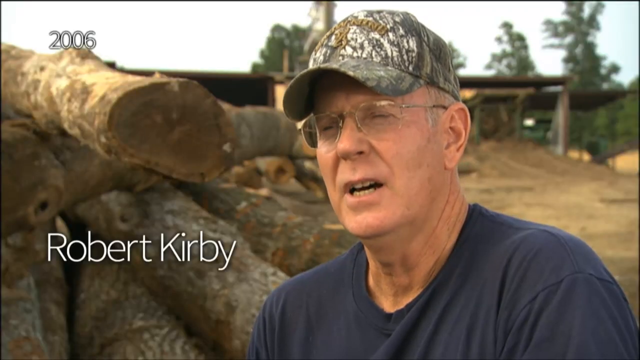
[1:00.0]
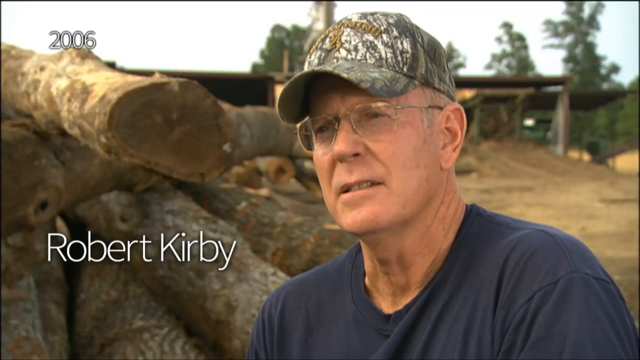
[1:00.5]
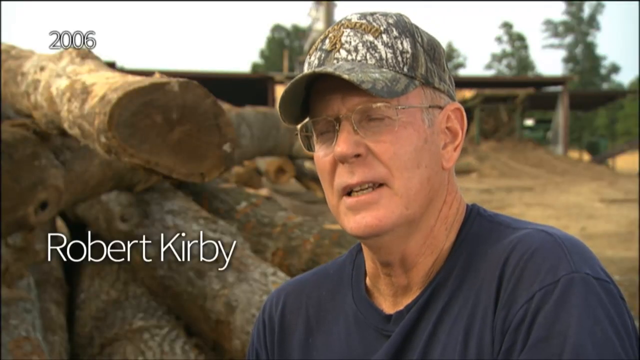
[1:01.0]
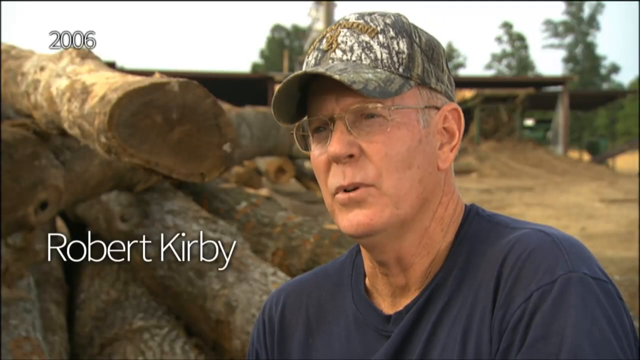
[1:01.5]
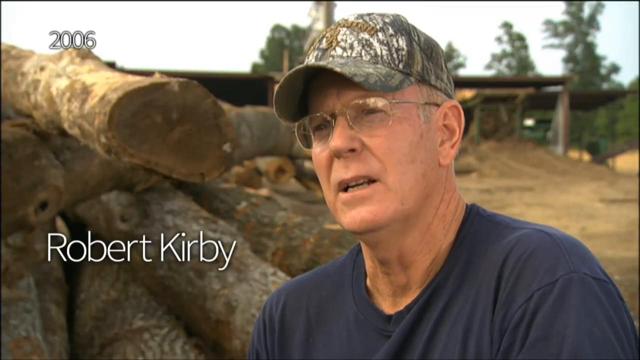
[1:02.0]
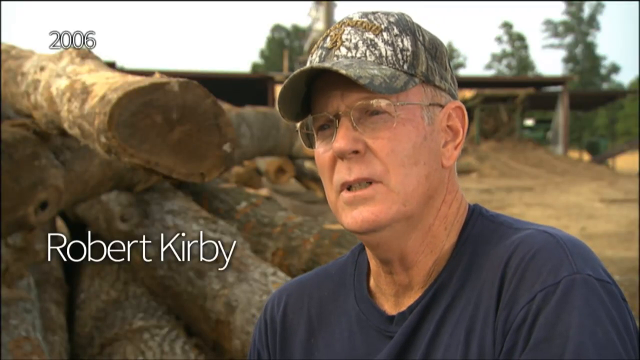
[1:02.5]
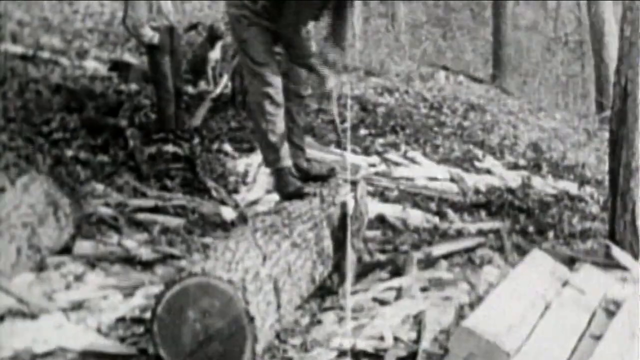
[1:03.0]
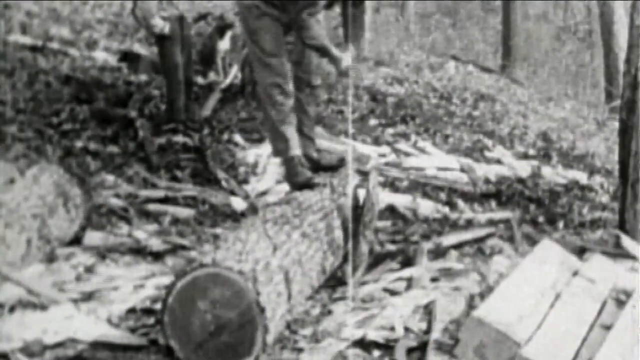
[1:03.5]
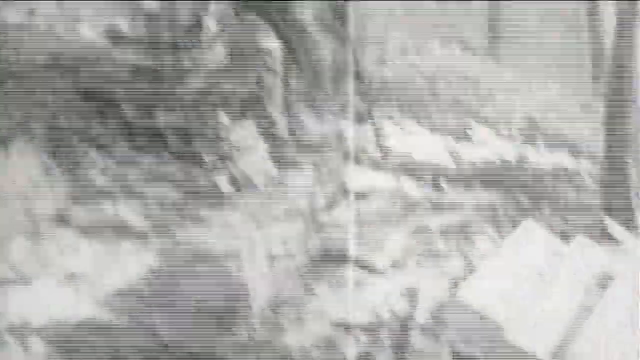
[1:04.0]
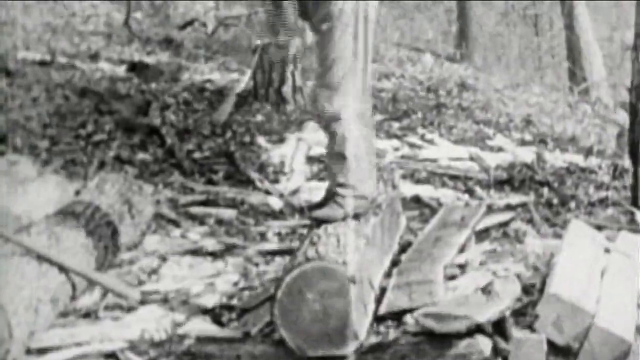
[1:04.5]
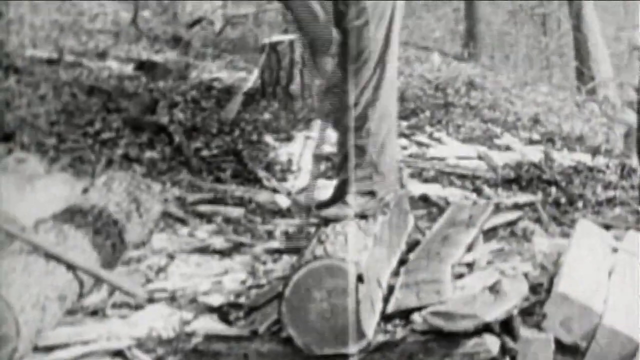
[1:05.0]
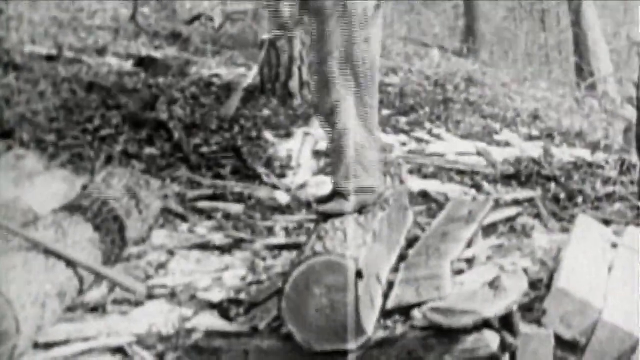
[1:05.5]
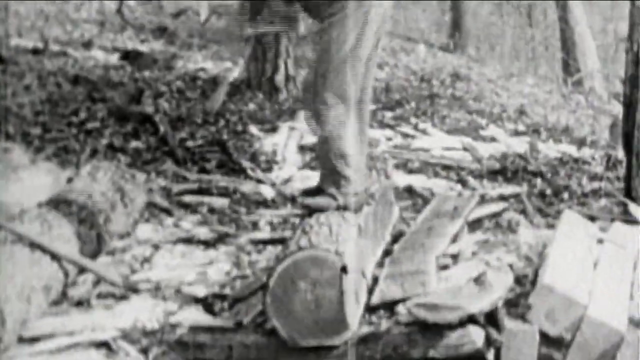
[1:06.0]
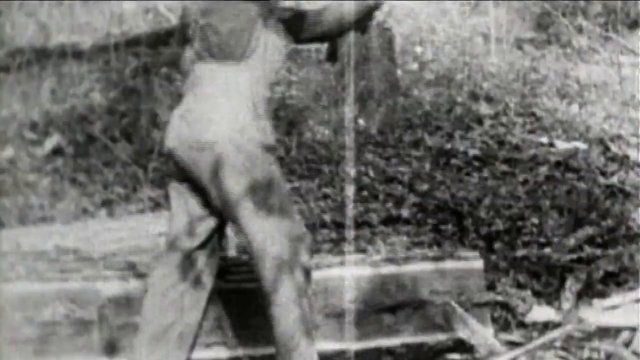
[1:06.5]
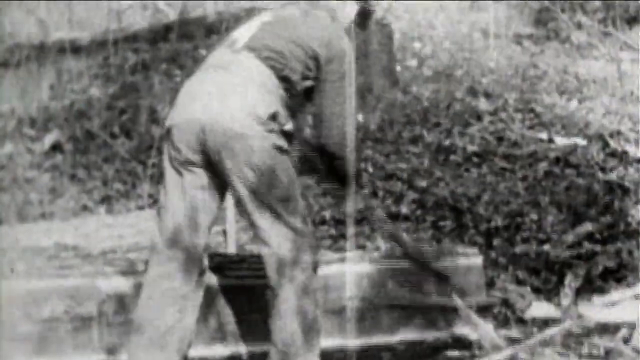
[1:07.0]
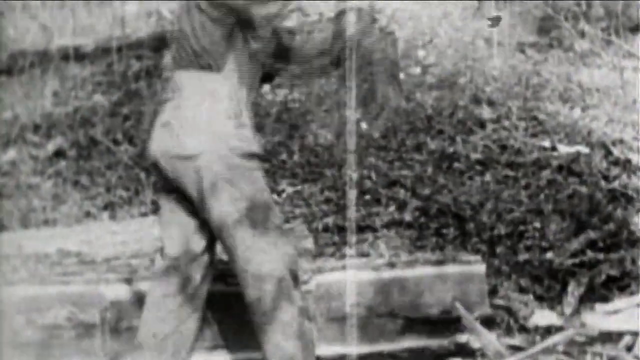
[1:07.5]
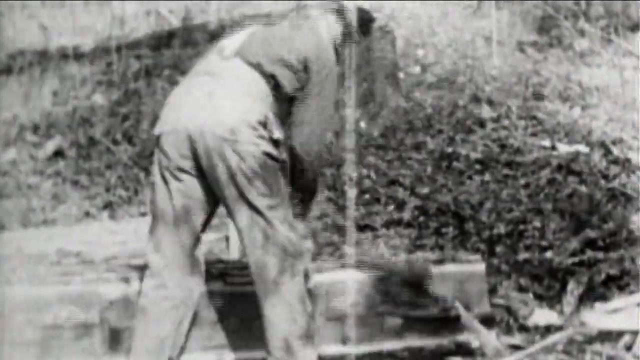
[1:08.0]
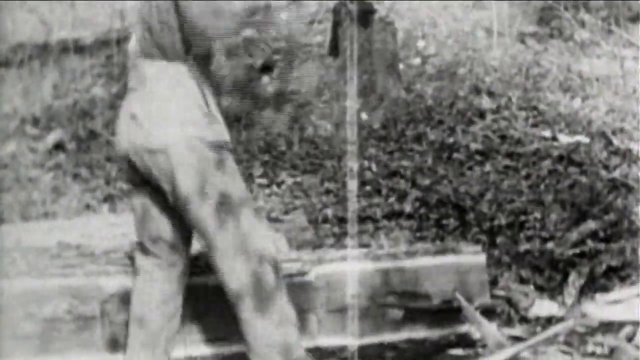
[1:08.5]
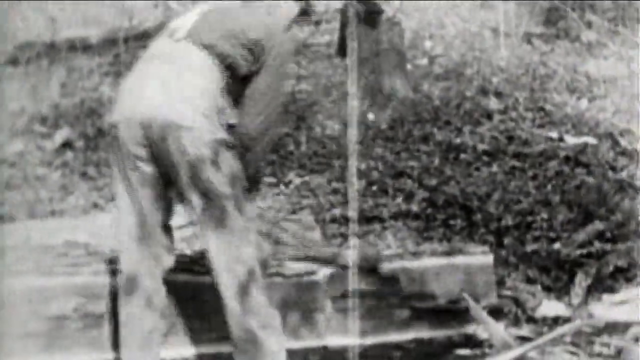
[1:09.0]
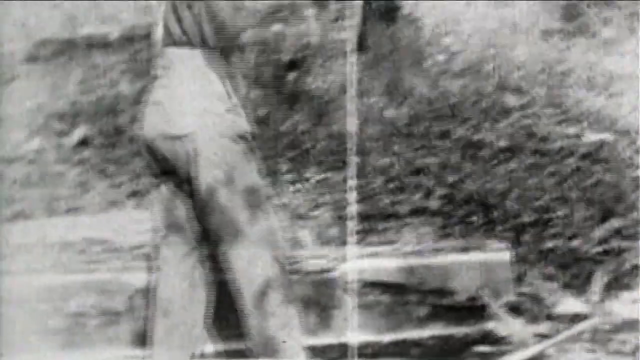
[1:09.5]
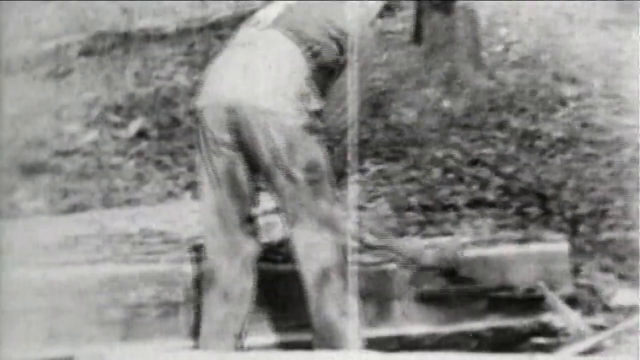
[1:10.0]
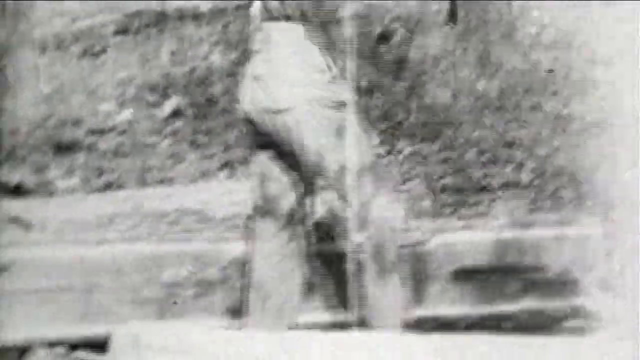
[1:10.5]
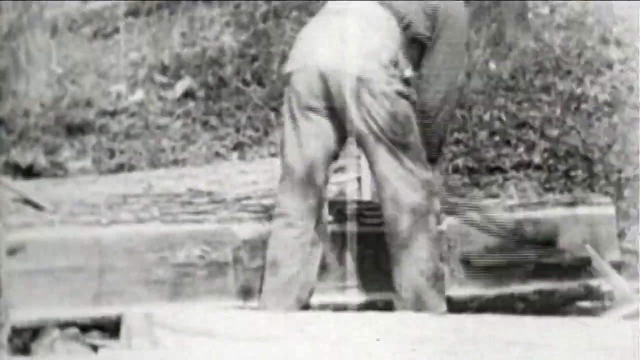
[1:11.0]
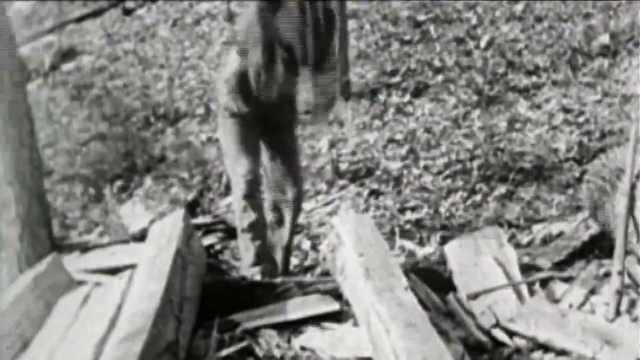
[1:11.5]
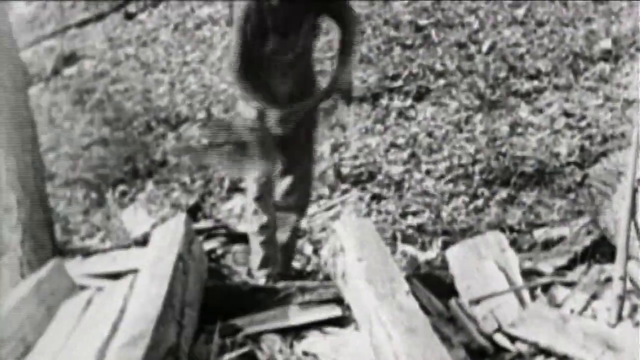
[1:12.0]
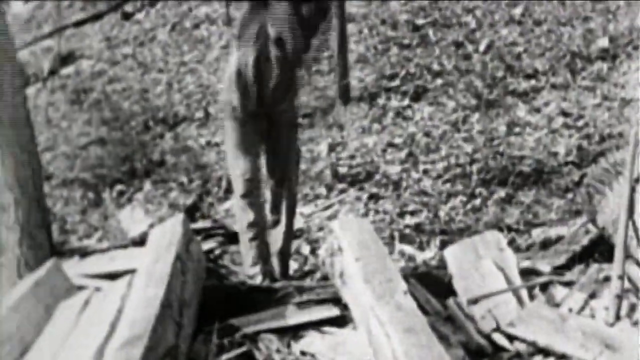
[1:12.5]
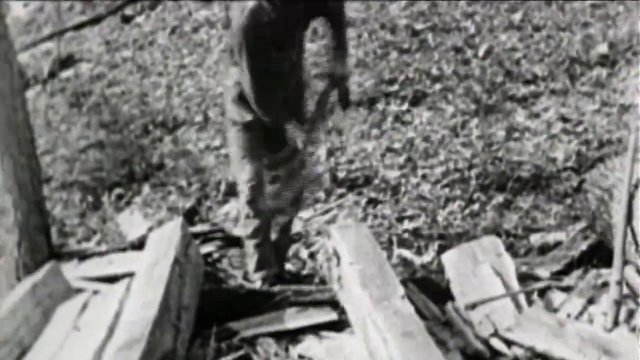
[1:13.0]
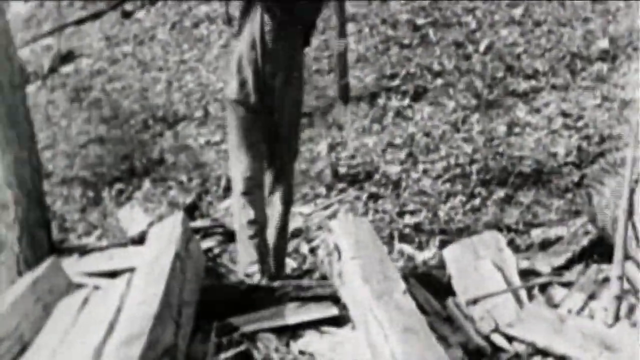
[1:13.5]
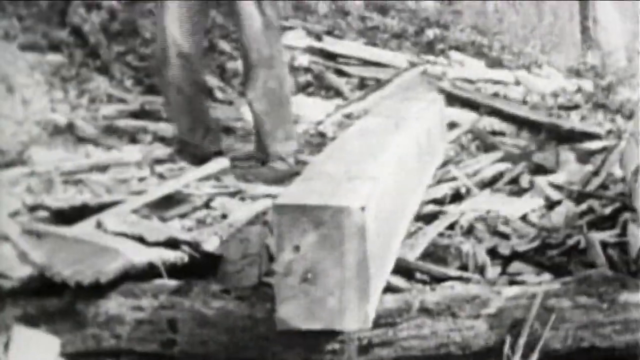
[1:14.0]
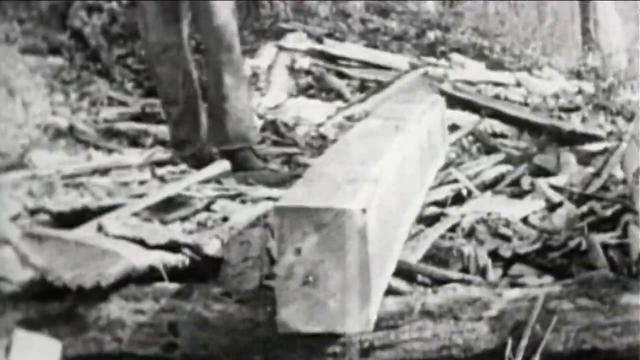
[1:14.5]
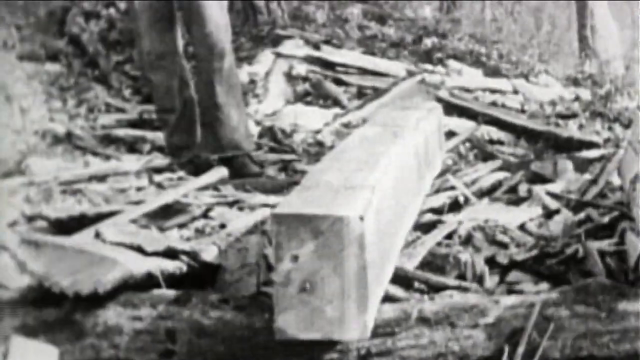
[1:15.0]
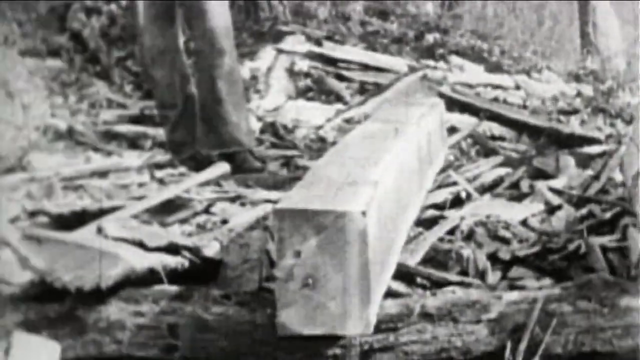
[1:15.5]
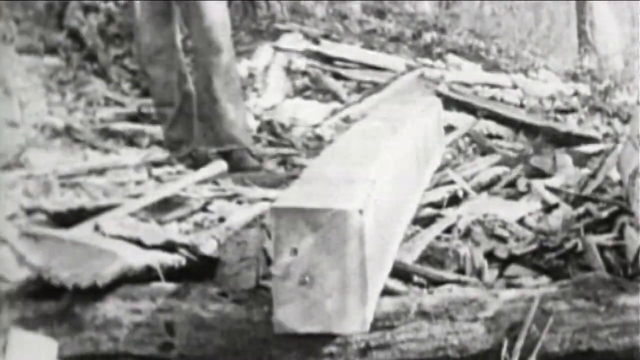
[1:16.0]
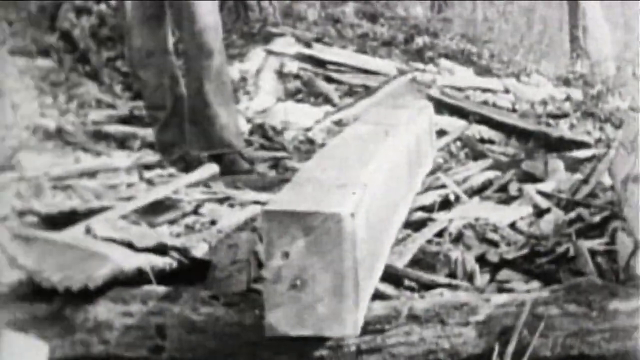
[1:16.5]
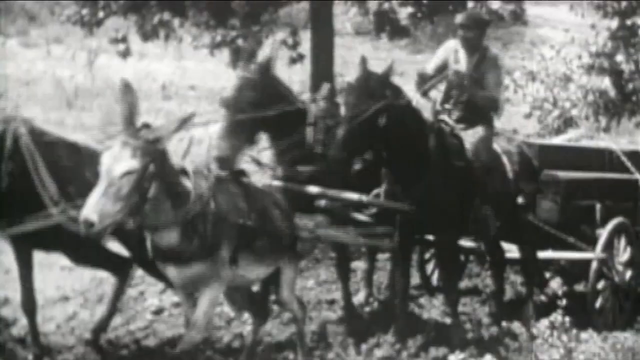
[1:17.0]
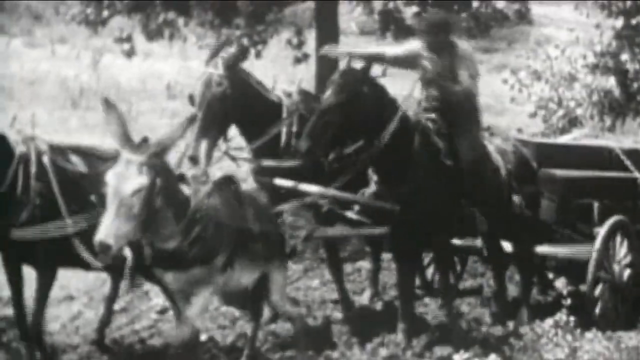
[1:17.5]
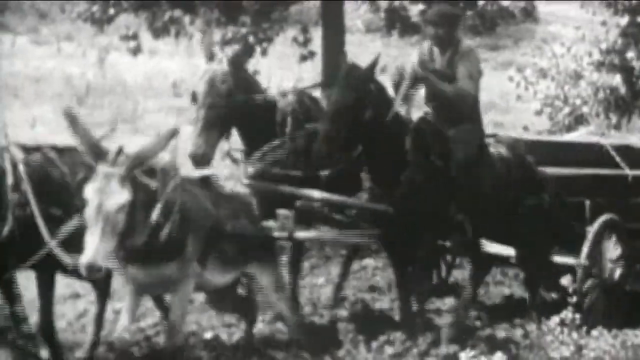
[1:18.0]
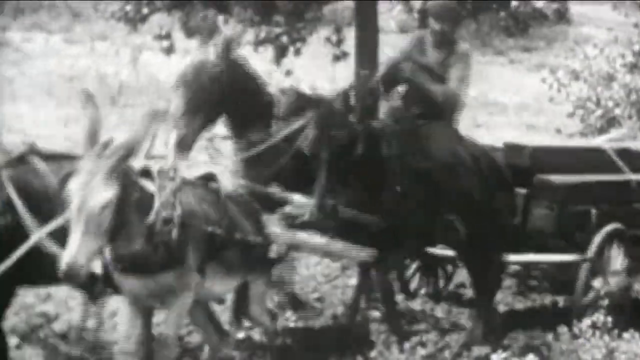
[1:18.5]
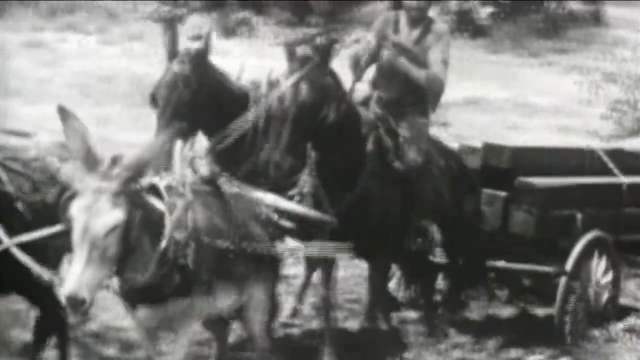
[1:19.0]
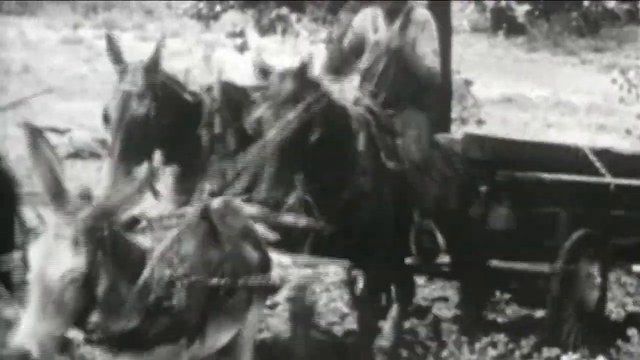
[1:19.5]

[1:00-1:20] Robbie Kirby is talking, and the screen says "2006". He is an older Caucasian man wearing glasses, a camouflage hat and a dark blue shirt, with logs and cut-down trees next to him. The video then returns to black-and-white footage of people sawing down more trees and logs. Everyone wears overalls as they hack at the wood, chopping it into smaller pieces. More people on horses carry the logs.